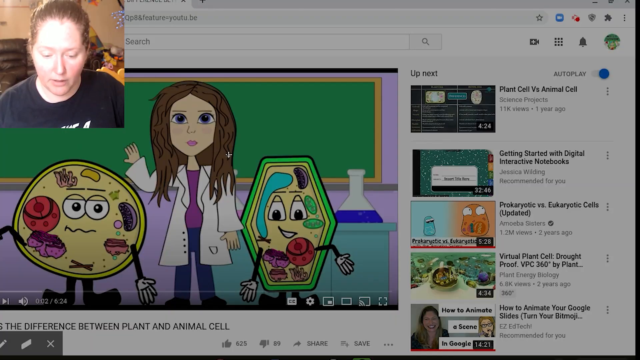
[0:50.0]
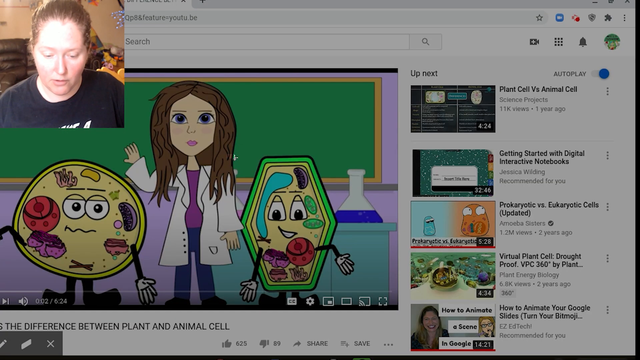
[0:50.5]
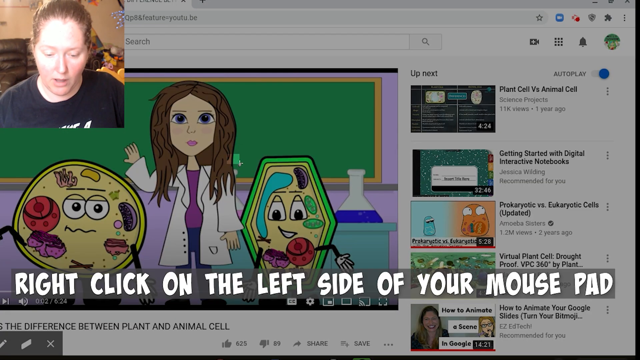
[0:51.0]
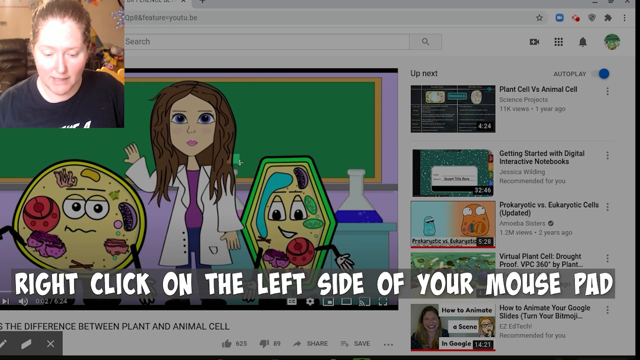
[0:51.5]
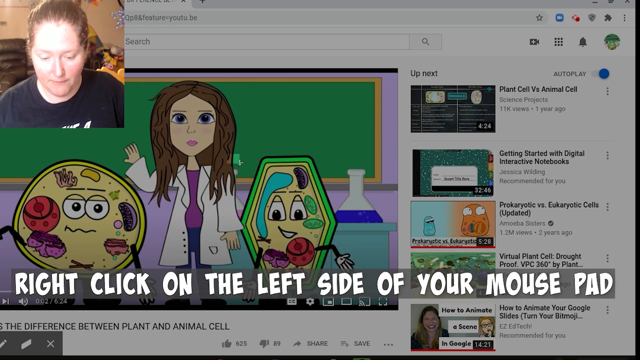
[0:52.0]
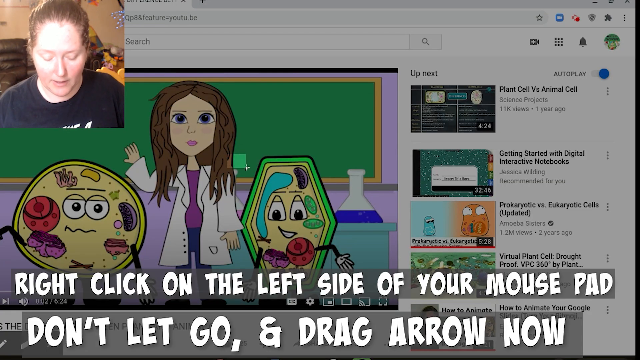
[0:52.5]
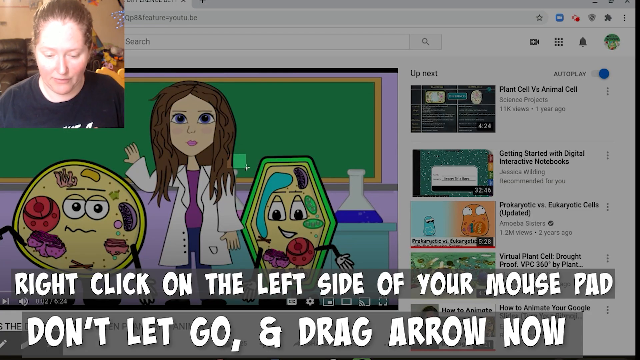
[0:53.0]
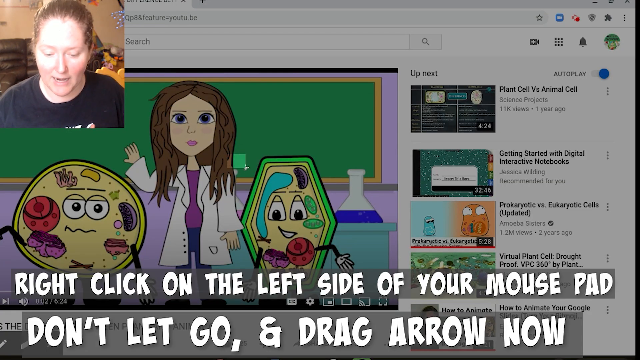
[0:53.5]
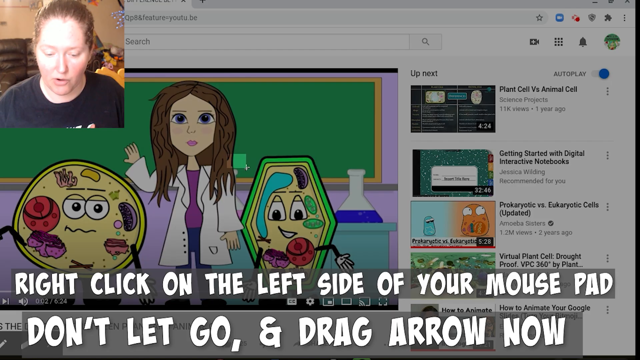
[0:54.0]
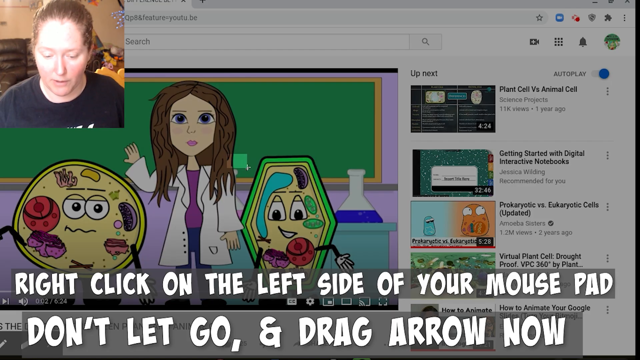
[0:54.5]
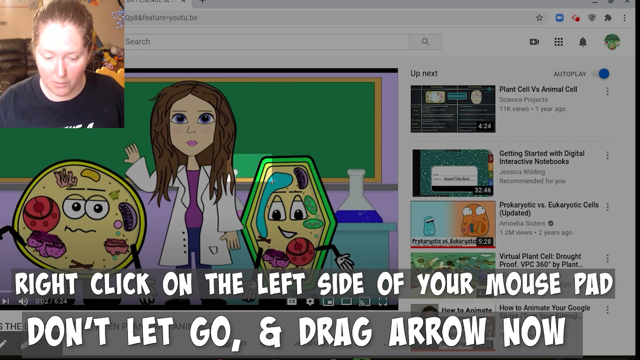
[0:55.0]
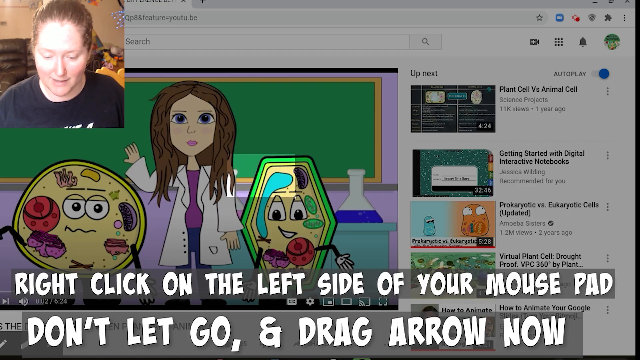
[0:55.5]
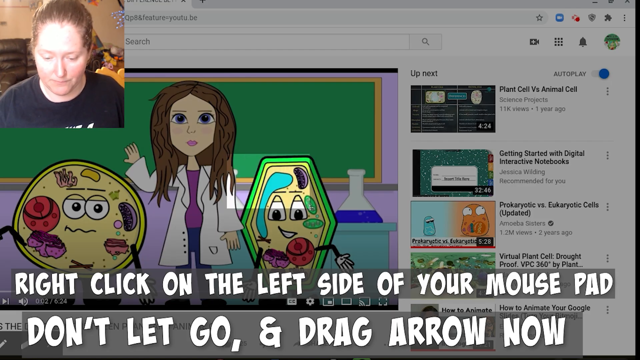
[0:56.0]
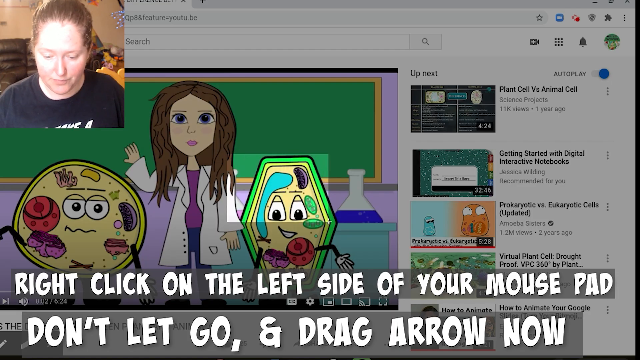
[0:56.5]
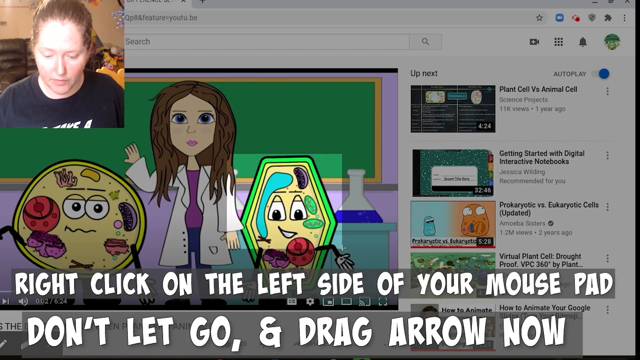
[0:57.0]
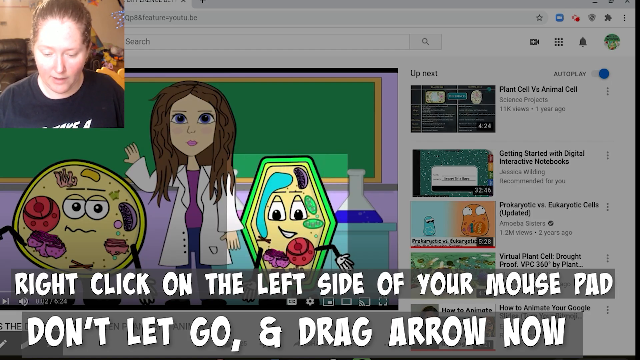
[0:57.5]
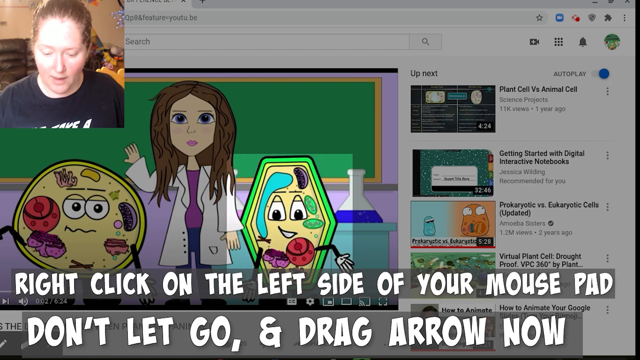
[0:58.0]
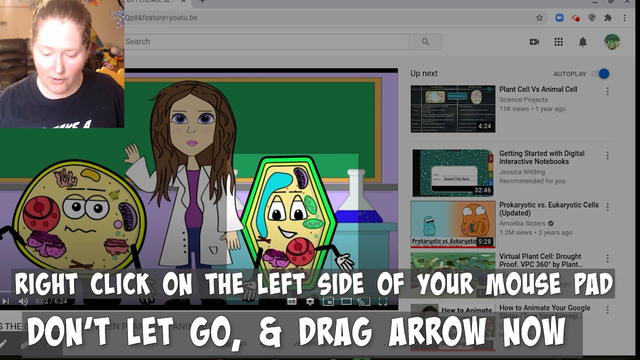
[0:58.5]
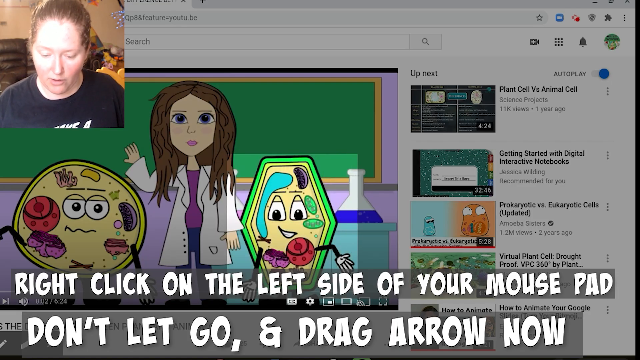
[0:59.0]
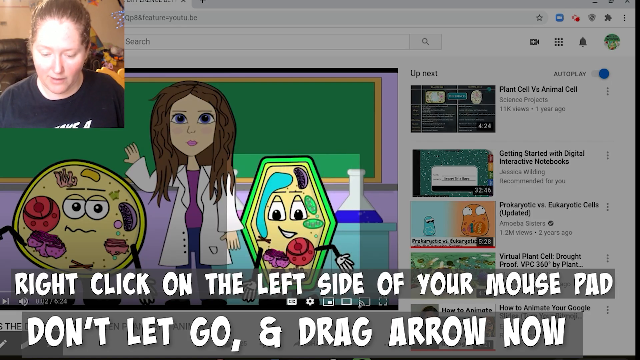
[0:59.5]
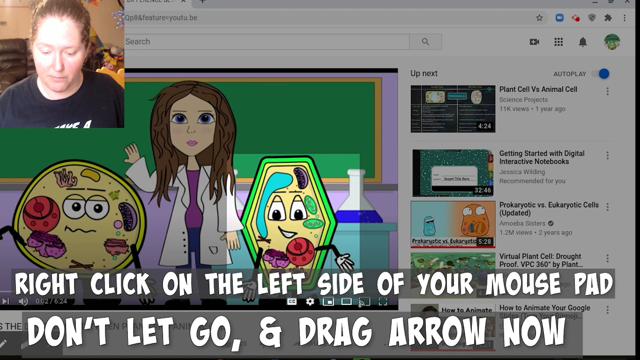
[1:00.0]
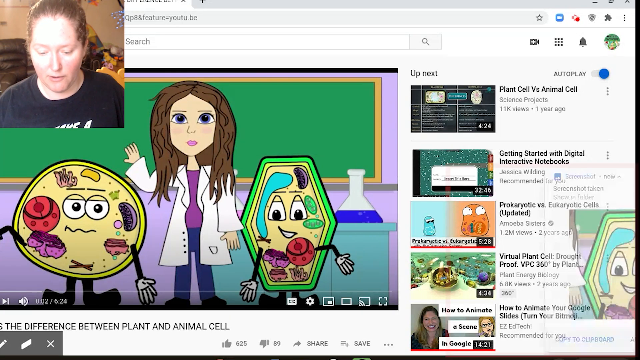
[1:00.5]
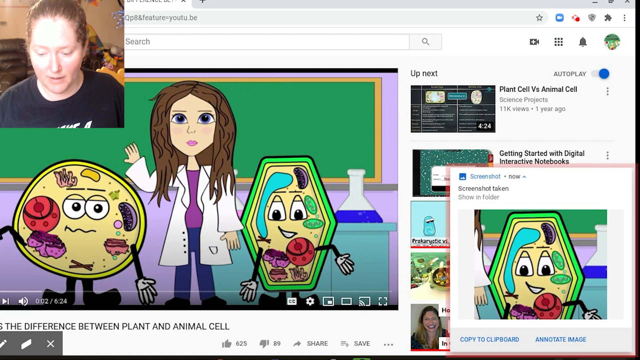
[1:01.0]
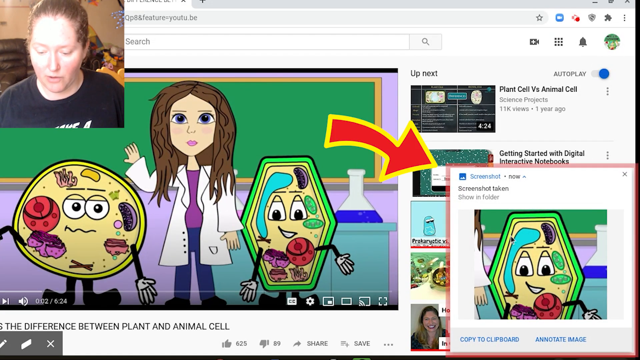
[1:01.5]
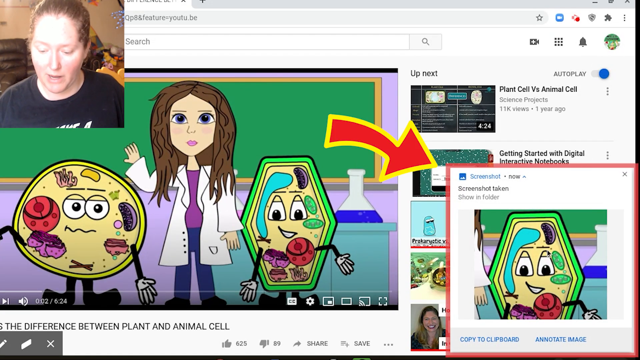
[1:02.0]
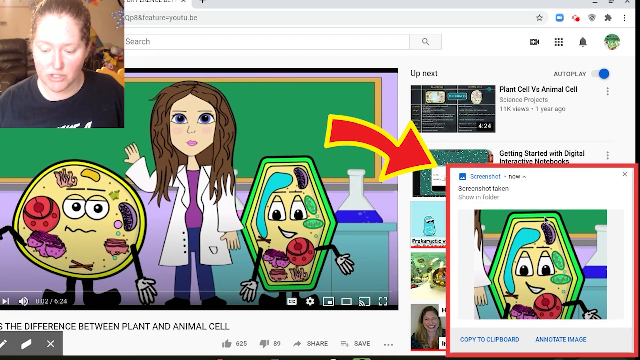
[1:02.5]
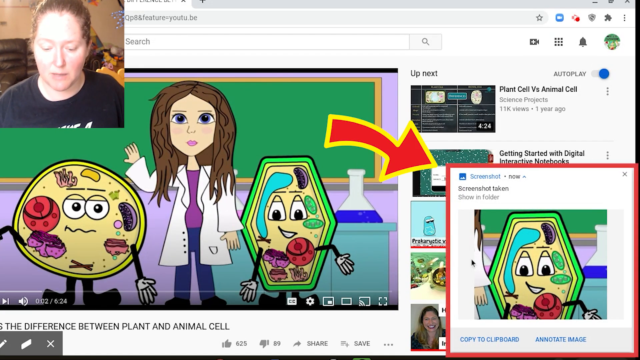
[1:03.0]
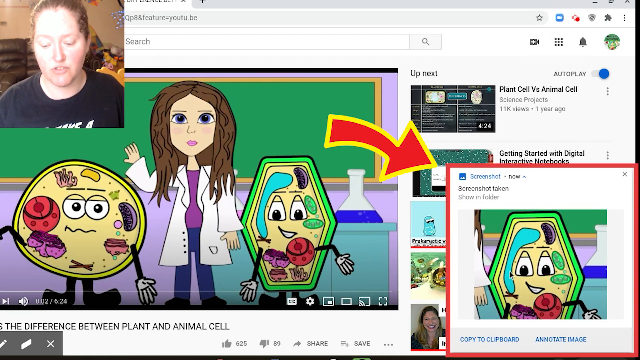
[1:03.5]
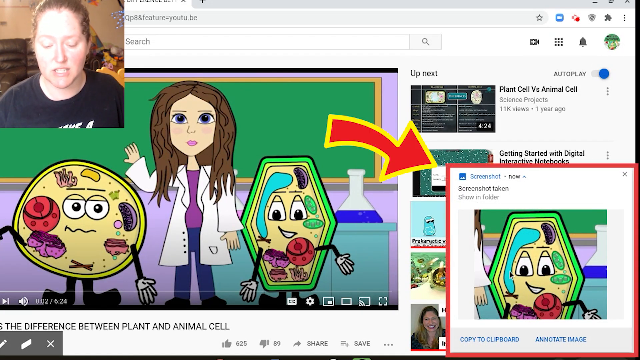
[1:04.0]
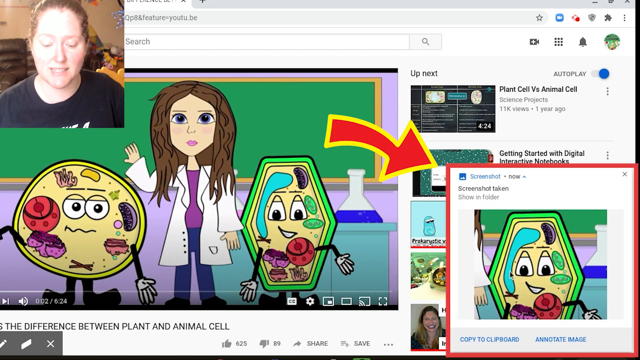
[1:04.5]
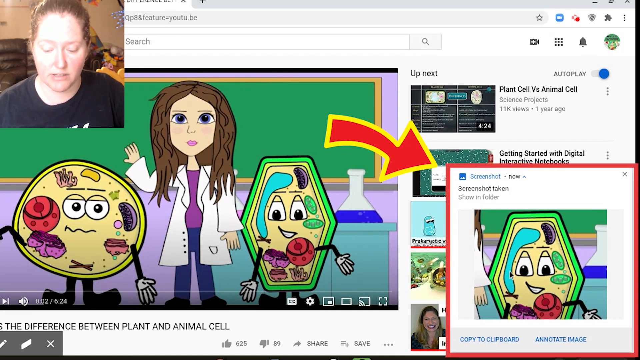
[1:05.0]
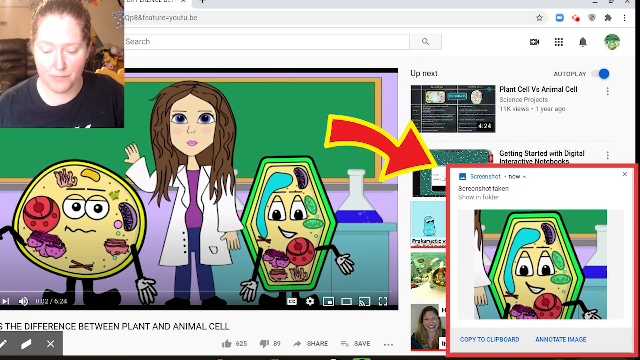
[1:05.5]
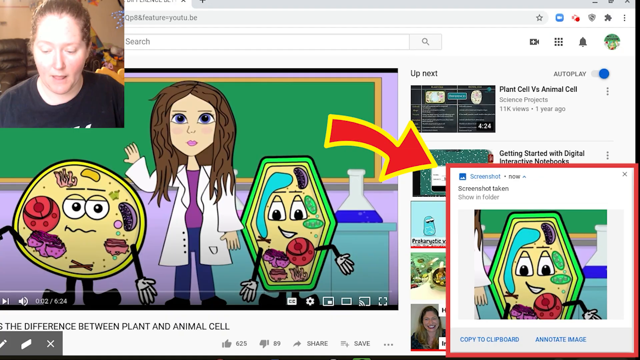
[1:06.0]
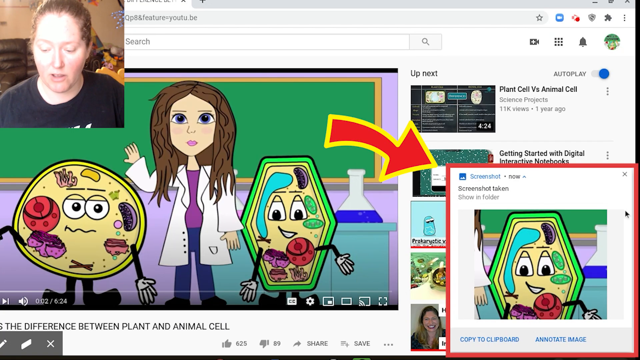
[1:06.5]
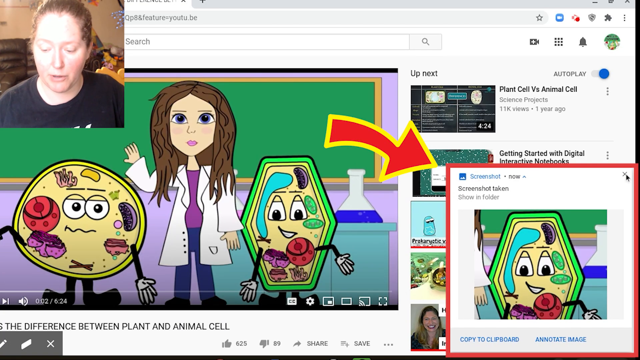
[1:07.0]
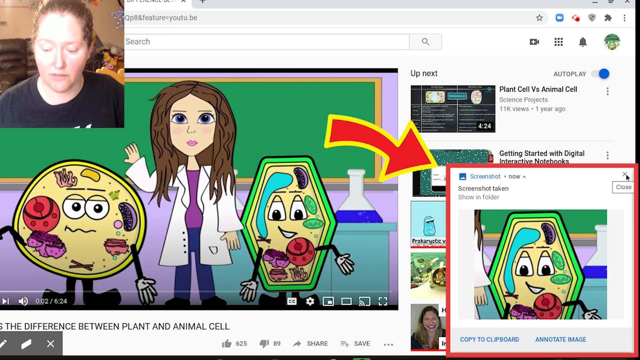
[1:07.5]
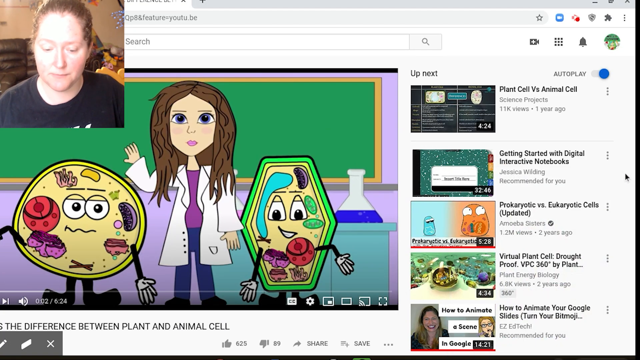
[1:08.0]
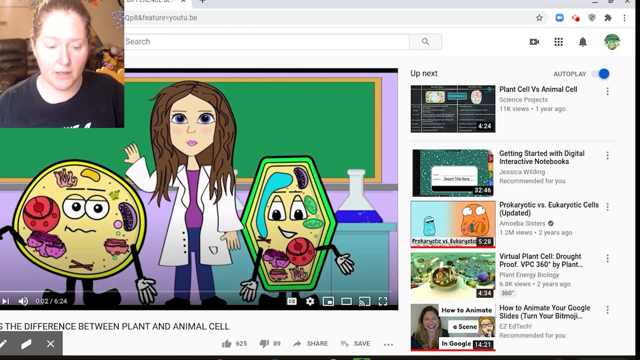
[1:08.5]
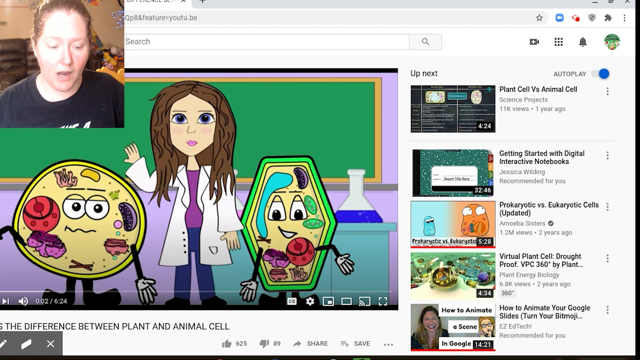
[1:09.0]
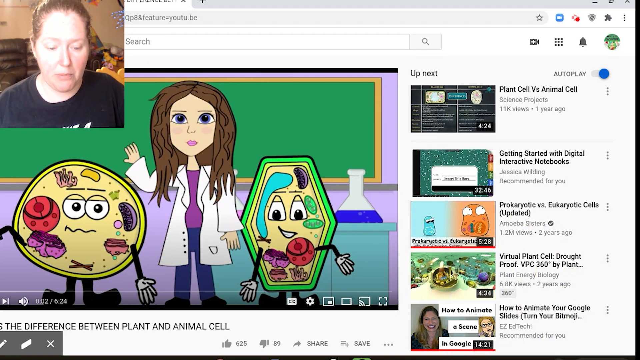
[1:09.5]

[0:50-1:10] Really big white text pops up at the bottom, reading "right click on the left side of your mouse pad, don't let go and drag arrow now". She appears to take a screenshot of a particular part of the screen, capturing the right, hexagonal cell, apparently about to put it into the document. At the top left of the document, its title reads "get to know Google Docs". In the middle, everything is set up in a table with three columns: the left column says "teach your video", the middle says "your task", and the right says "now show your work". The first task, which reads "insert a screenshot of this YouTube video", seems already done, with a picture in the "now show your work" column for that row.